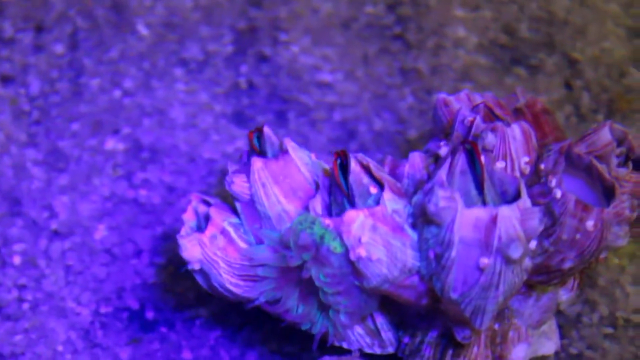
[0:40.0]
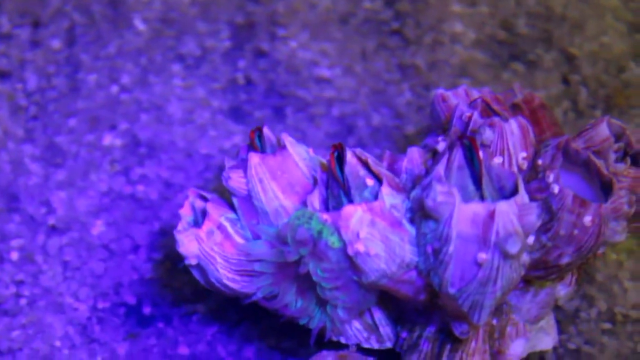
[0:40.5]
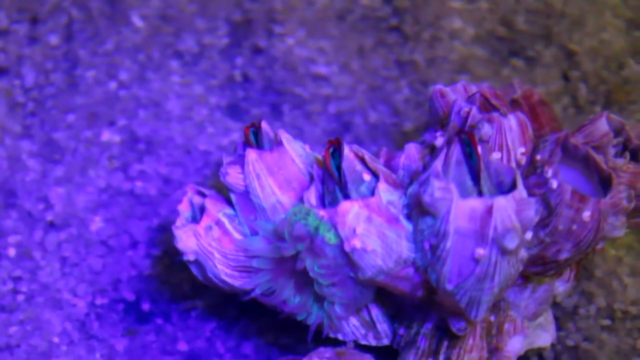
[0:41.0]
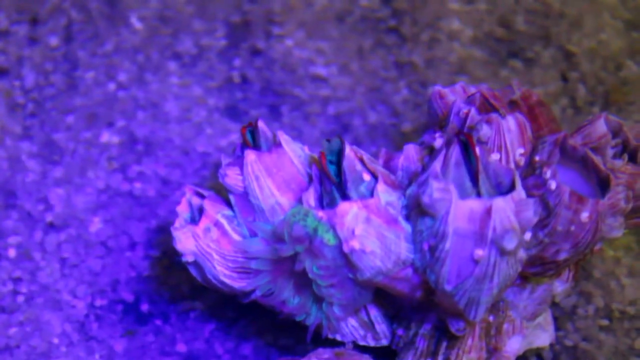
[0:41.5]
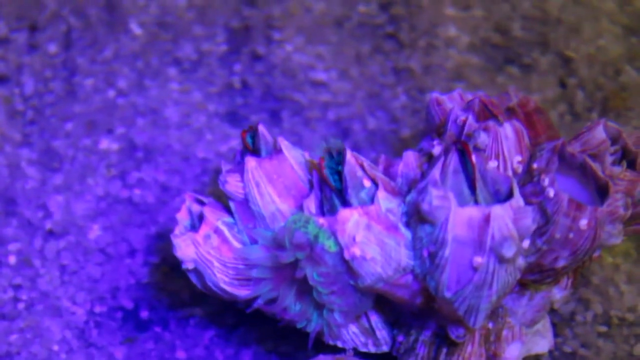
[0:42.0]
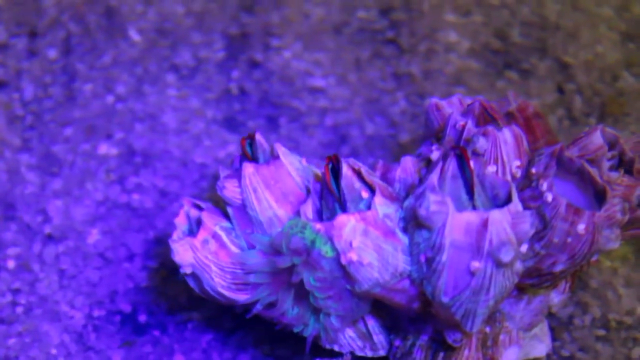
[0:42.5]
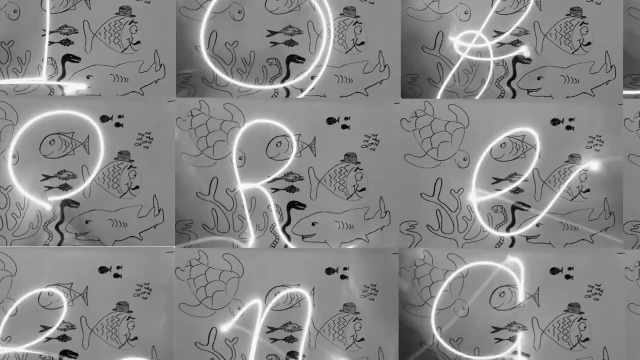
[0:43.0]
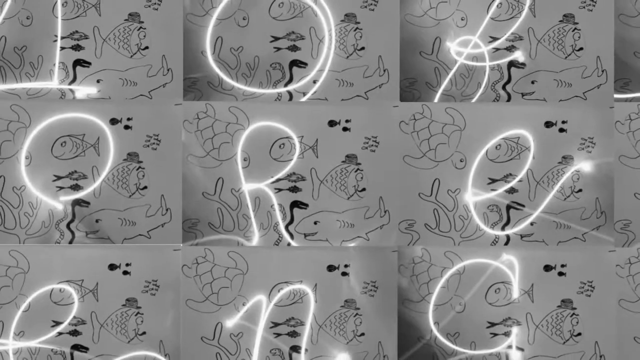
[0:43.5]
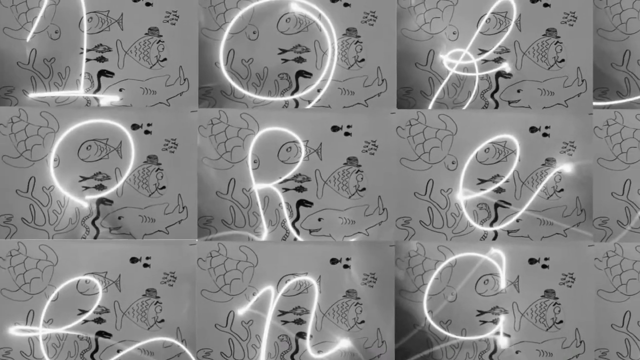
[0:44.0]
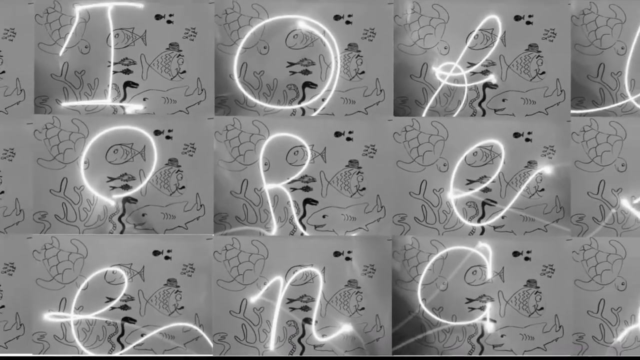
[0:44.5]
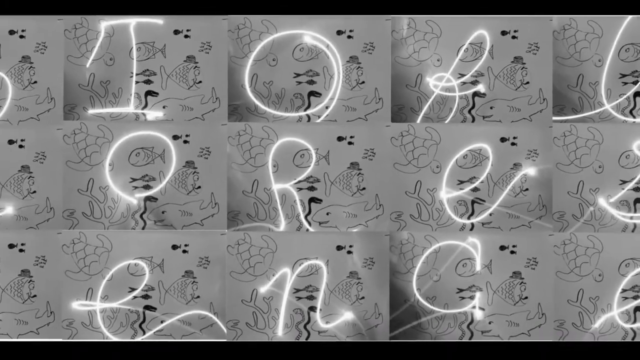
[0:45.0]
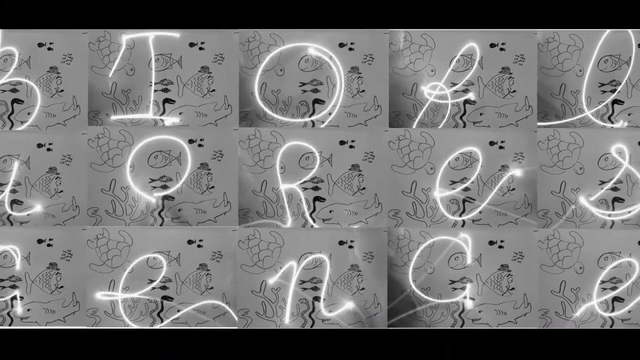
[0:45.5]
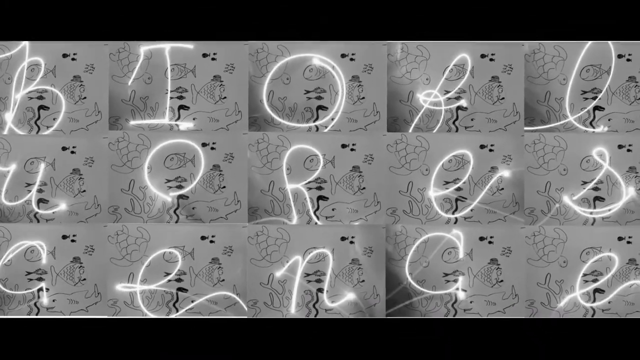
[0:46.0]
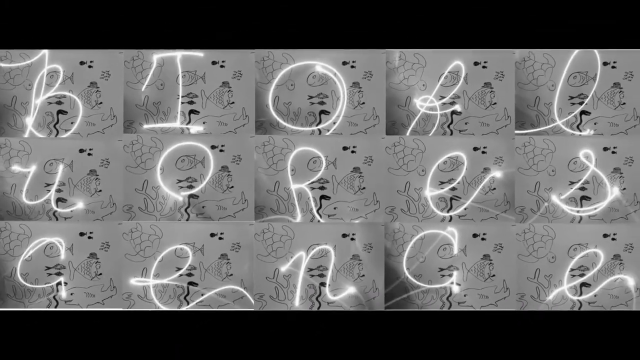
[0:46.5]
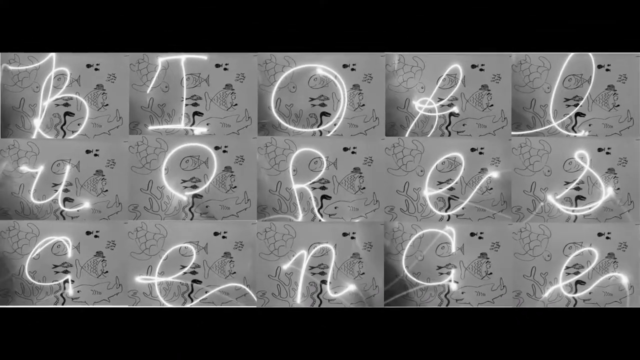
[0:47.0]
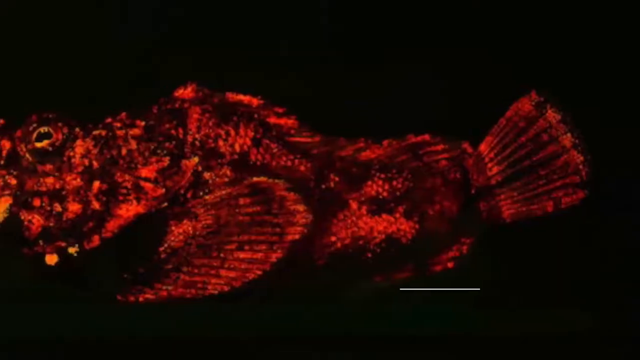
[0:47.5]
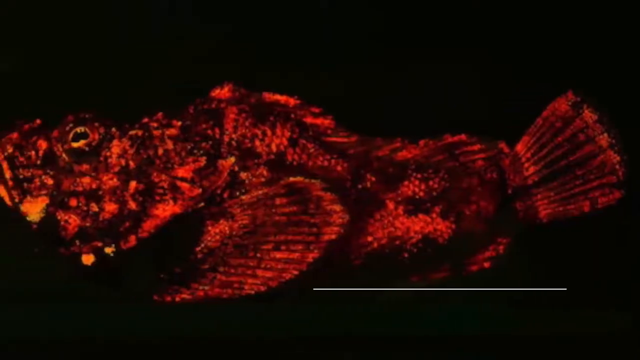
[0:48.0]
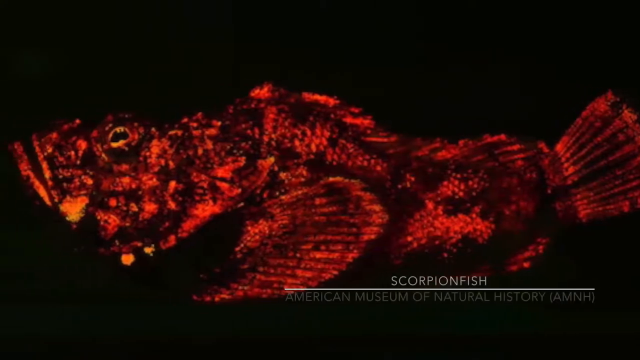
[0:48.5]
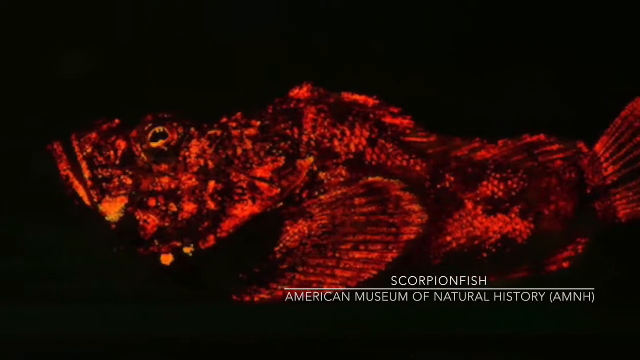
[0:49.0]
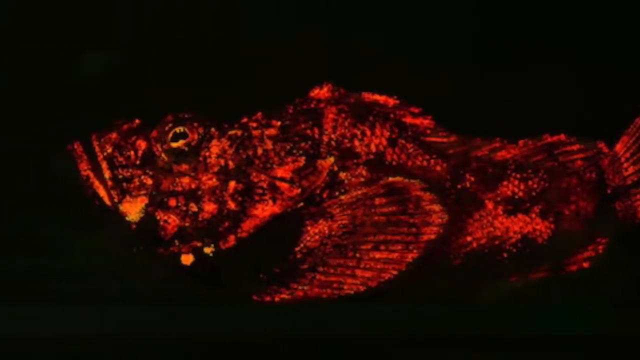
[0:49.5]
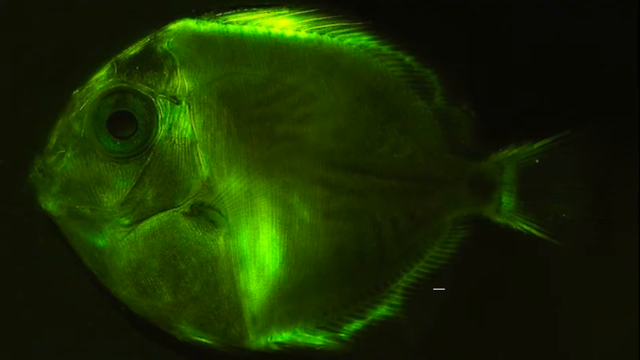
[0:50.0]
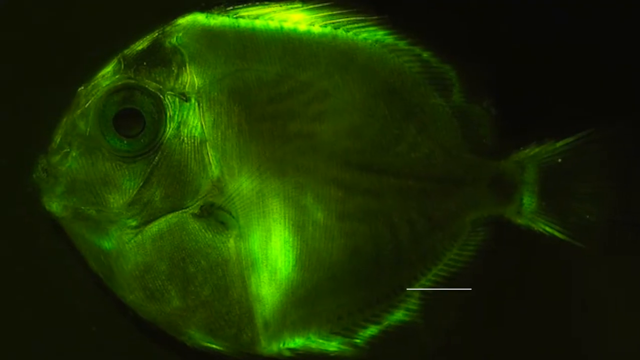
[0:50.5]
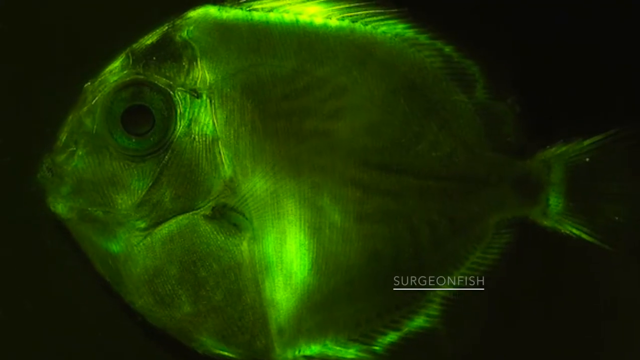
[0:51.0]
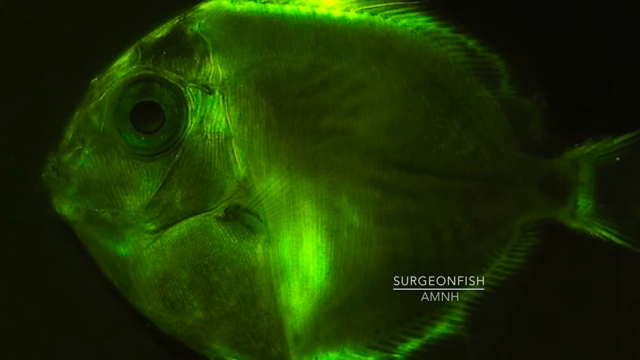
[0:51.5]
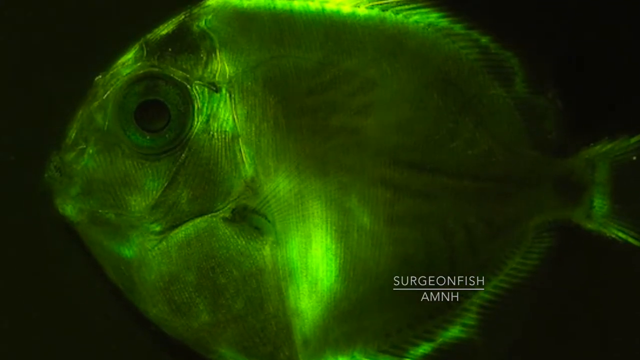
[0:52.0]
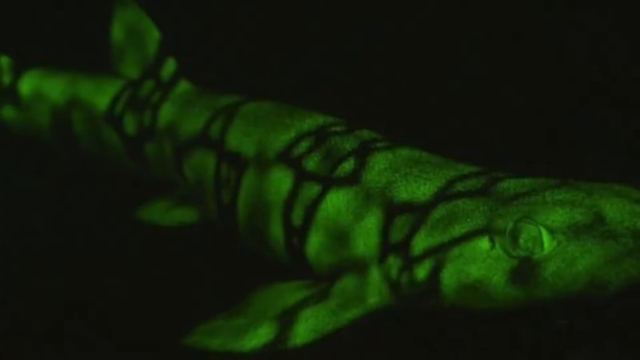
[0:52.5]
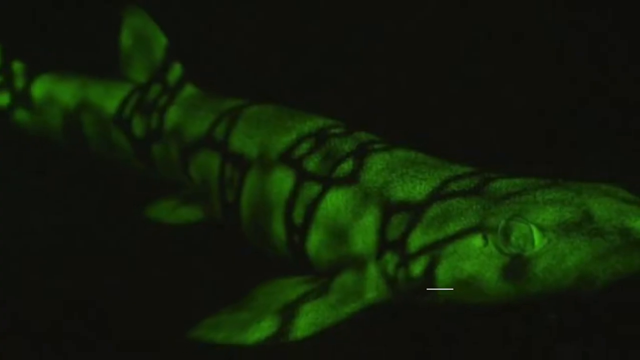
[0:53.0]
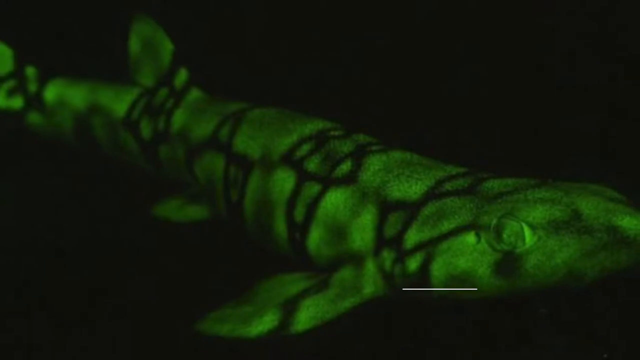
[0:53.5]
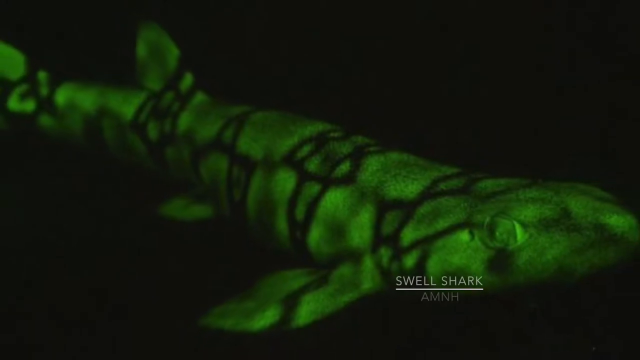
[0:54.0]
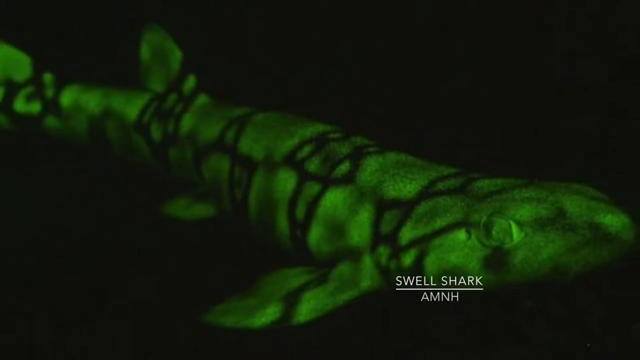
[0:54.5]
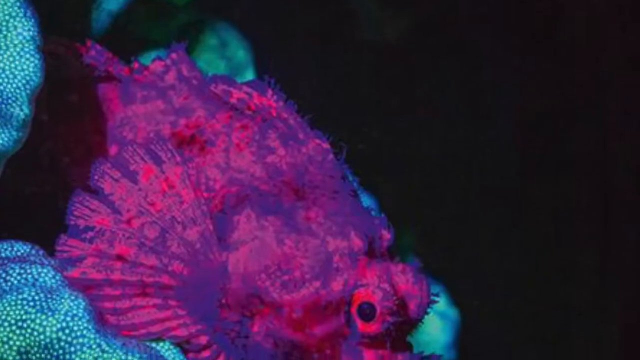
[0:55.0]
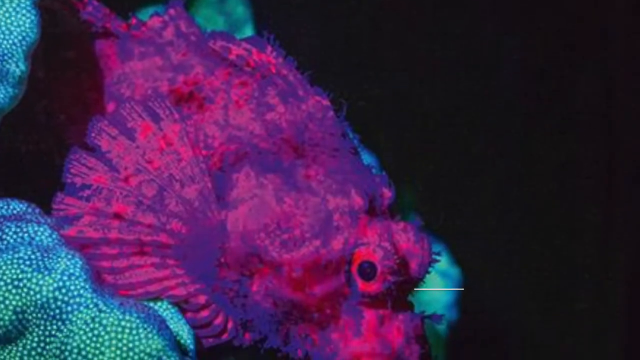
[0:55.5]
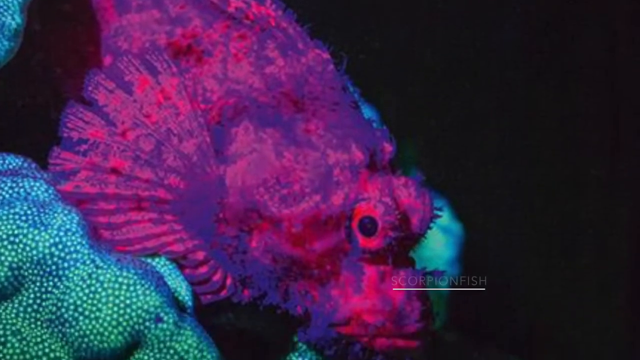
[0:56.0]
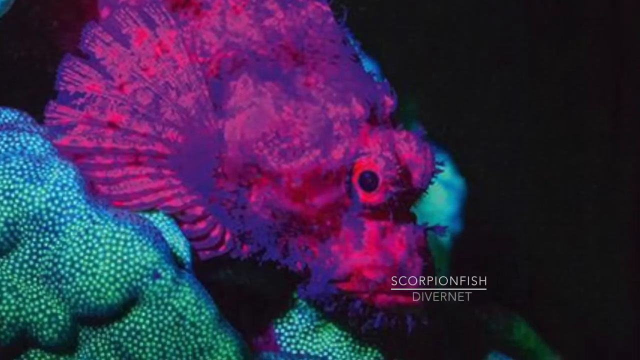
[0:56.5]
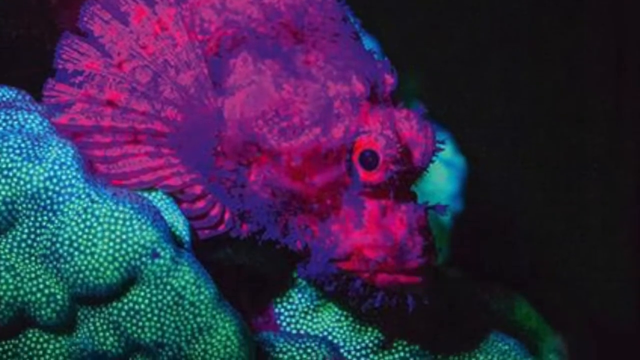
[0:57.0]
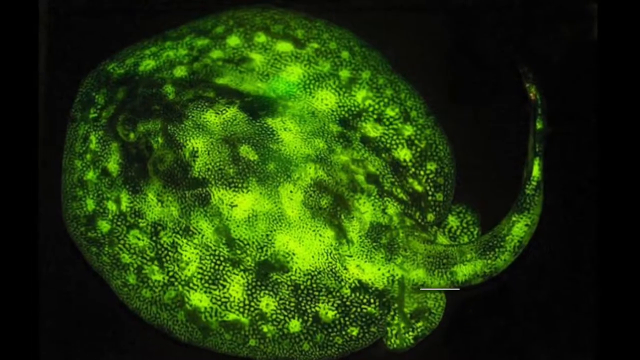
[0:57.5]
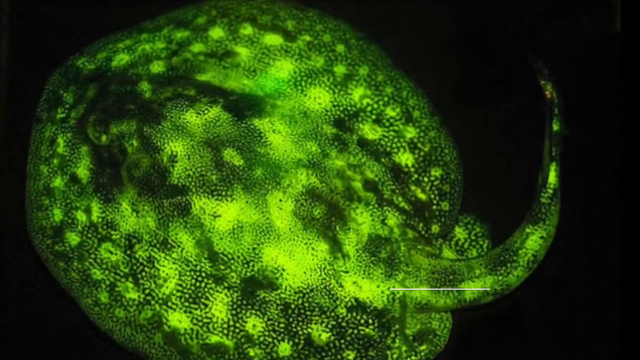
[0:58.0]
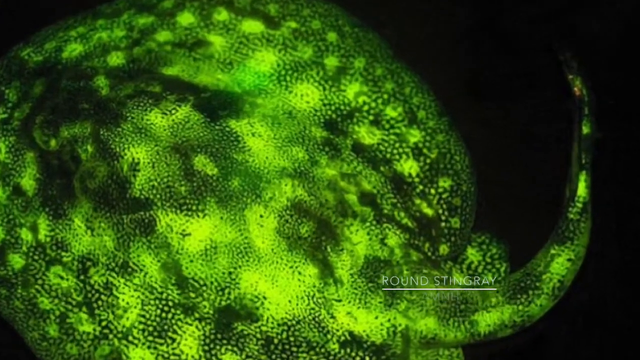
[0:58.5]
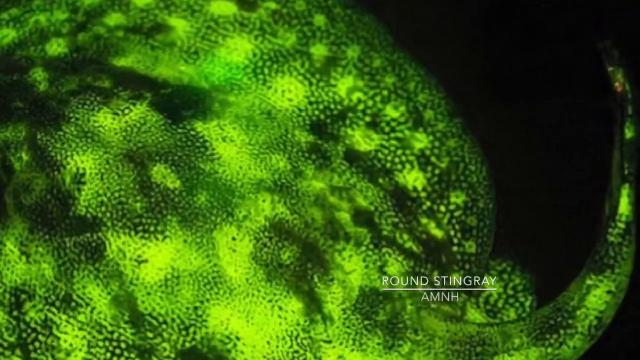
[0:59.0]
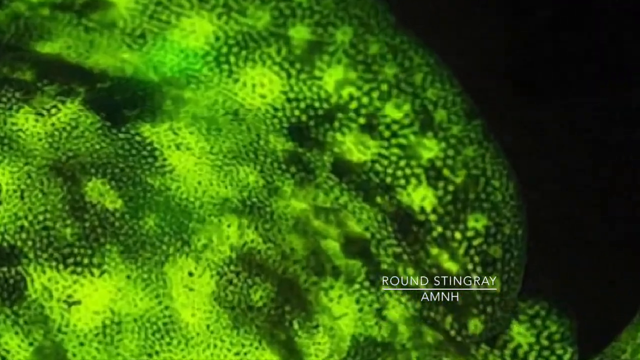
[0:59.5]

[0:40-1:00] Aquatic life is illuminated by a purple light, and an animal moves. A neon illustration of Samoa with some letters appears. Next comes a red illustration of a fish that looks like it was captured through a microscope, followed by a fish illuminated by green light, which zooms in toward the screen and then disappears. Different sea animals are lit with different colors of light, with descriptive words below them naming animals such as a swell shark, a scorpion and a round stingray.